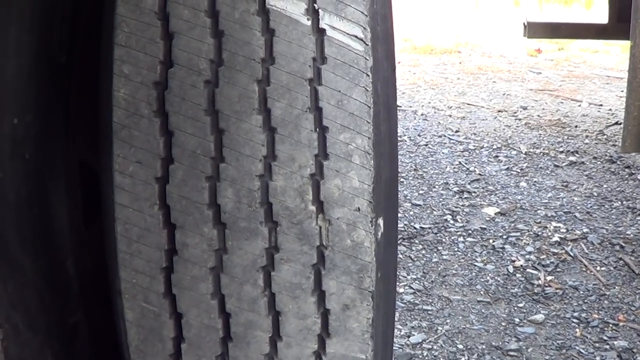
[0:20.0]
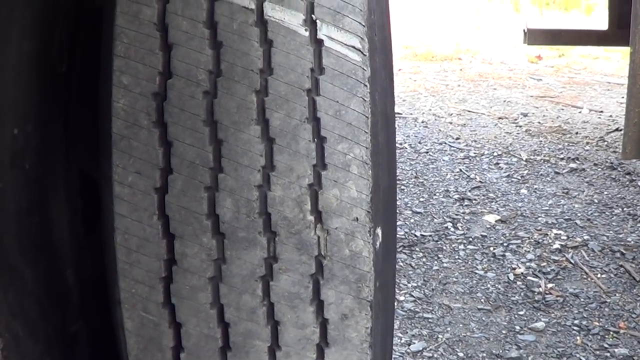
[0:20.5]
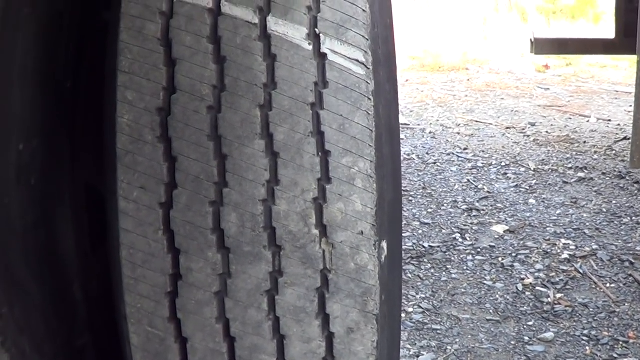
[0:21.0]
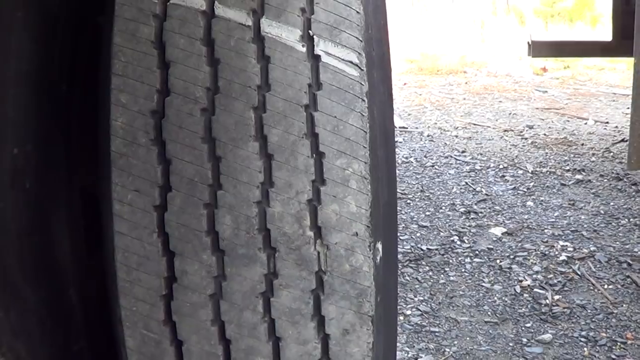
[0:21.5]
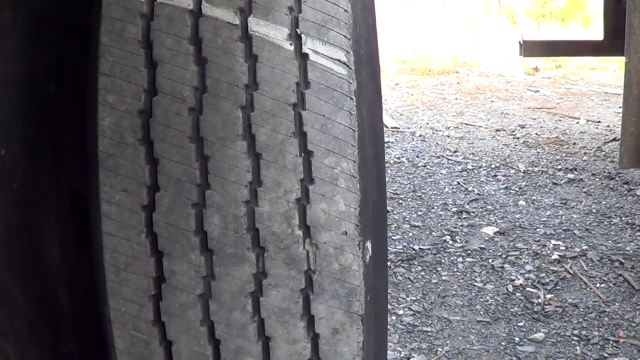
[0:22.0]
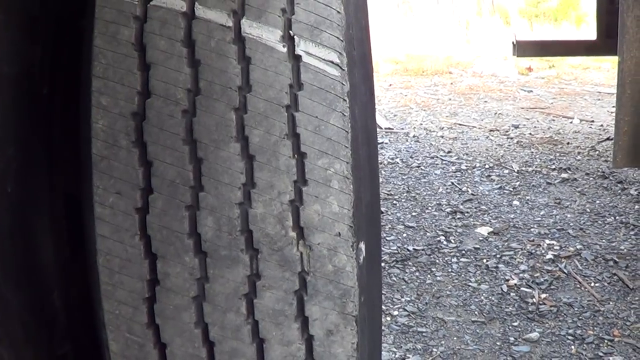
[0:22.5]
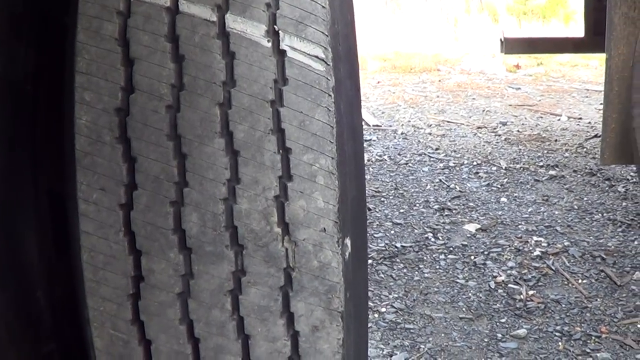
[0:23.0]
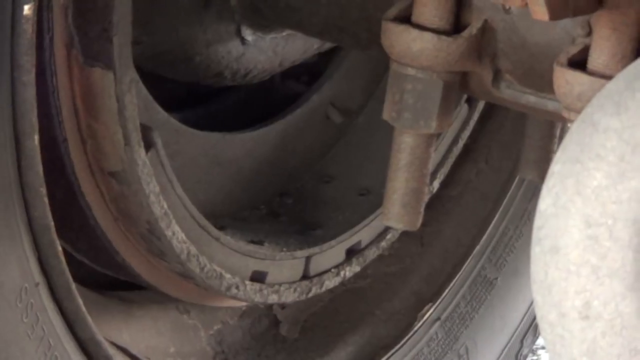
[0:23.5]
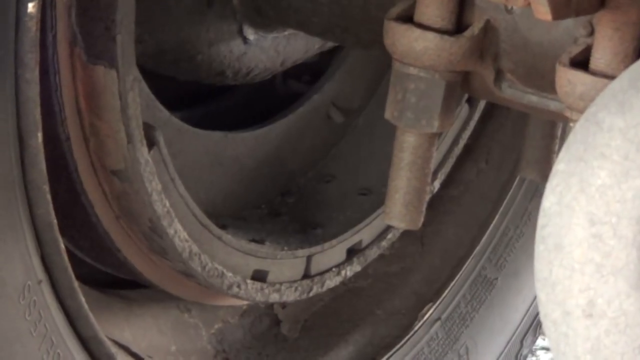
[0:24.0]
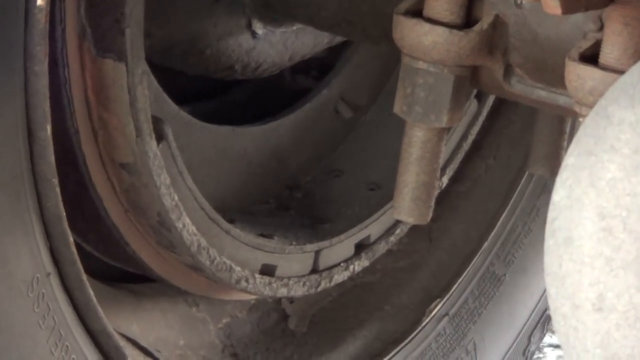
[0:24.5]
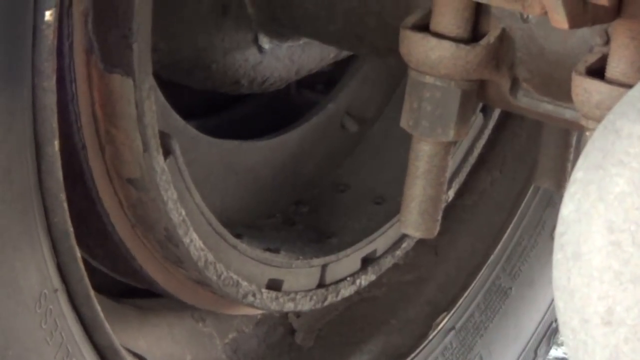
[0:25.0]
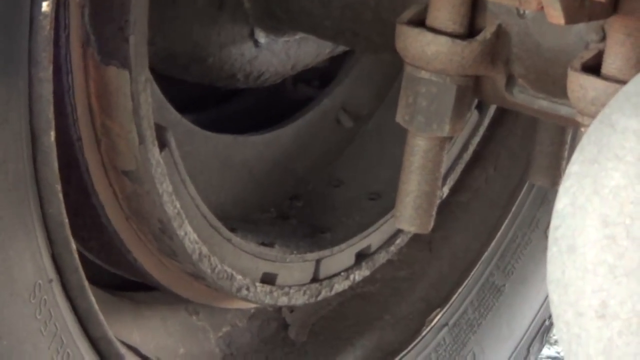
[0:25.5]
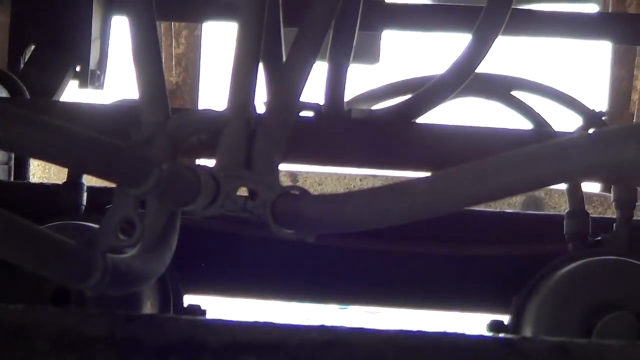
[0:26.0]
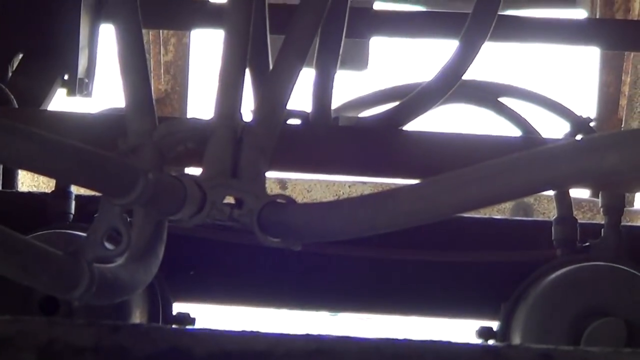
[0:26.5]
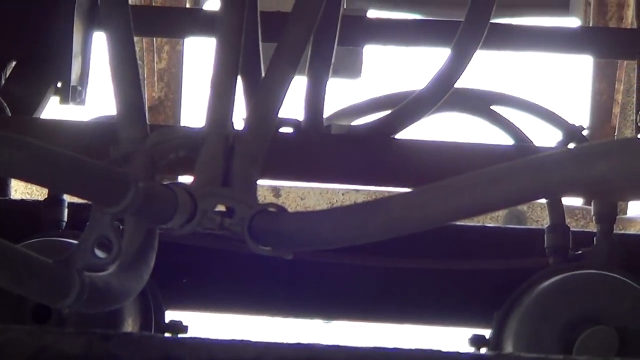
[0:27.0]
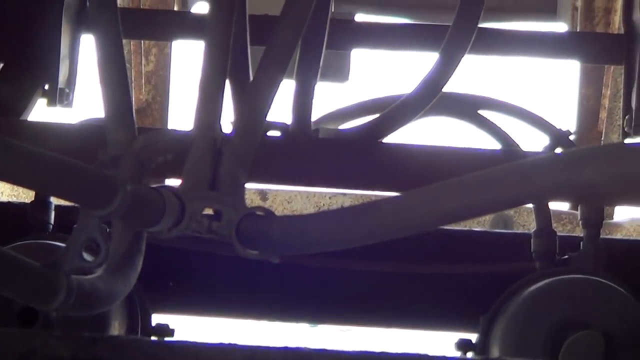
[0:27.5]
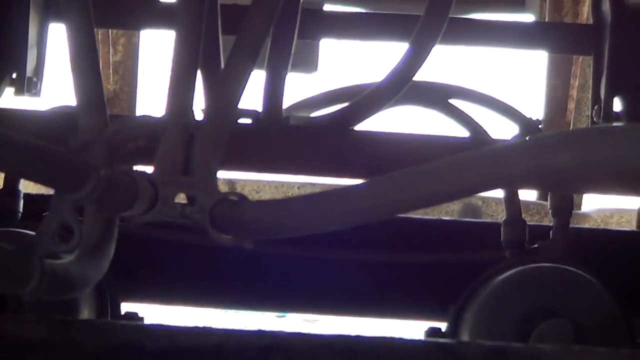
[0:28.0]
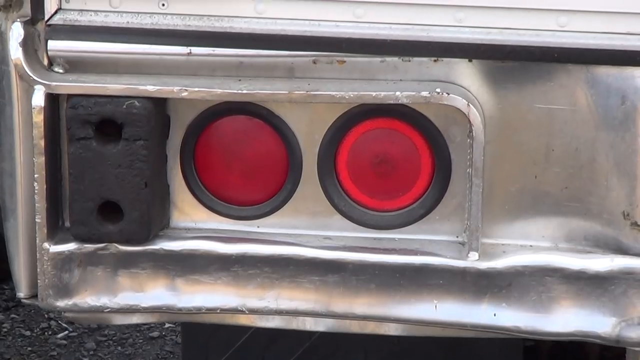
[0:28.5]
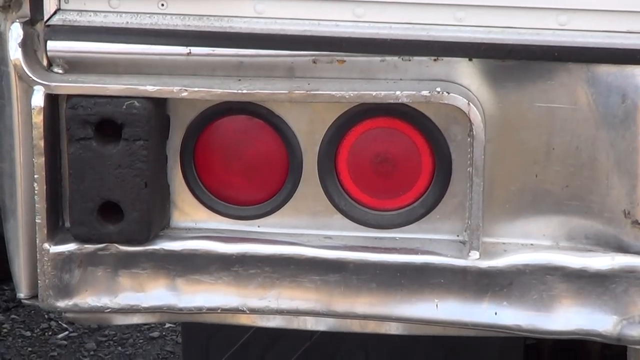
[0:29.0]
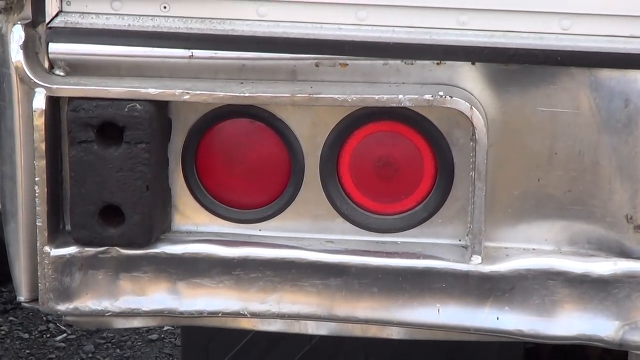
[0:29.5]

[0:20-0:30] A tire's treads appear, looking a little worn, with dirt covered in gravel and twigs to the right of the tire. The view moves to the inside of the tire and the inside of the rim, where the axle apparently goes into the wheel. Under the vehicle there is what looks like an axle and possibly some other pipes, hard to identify exactly, though it is definitely the undercarriage of a car. Then what looks like a silver bumper appears, dented in a little.